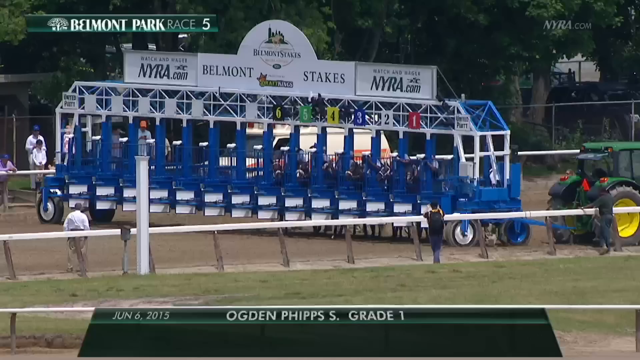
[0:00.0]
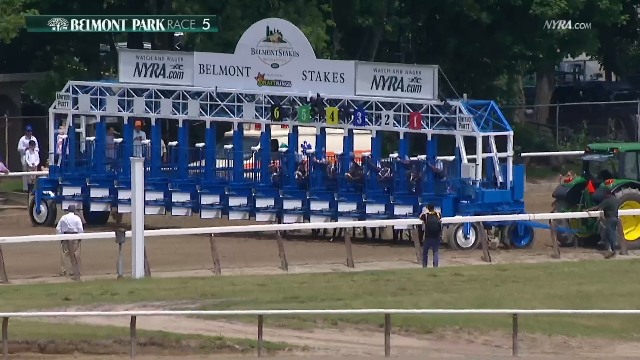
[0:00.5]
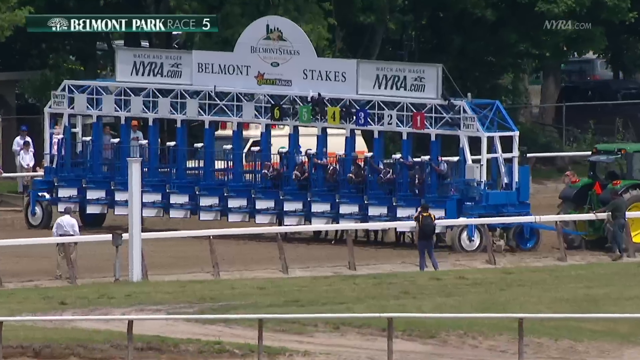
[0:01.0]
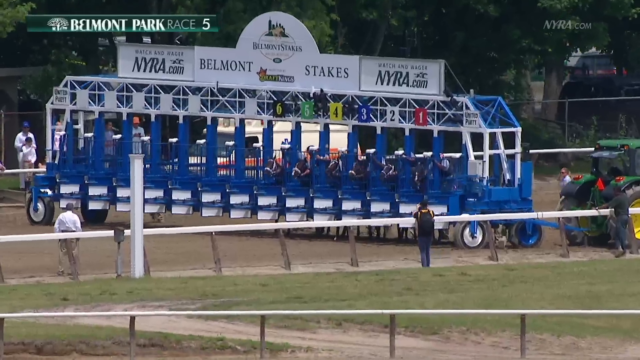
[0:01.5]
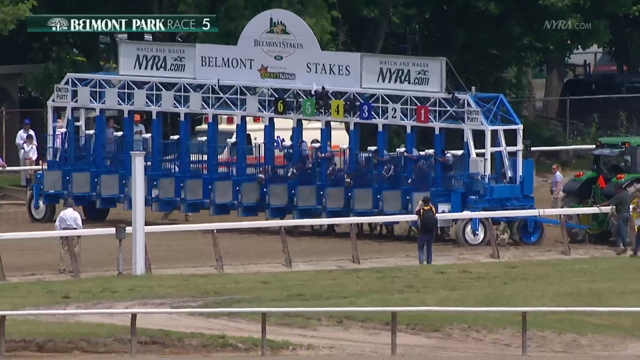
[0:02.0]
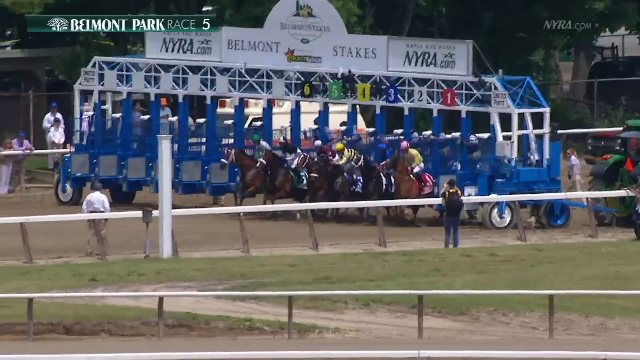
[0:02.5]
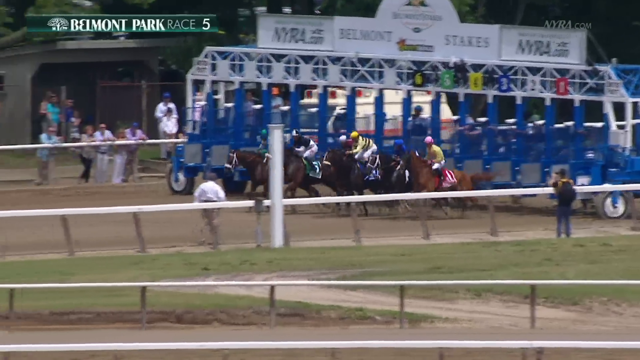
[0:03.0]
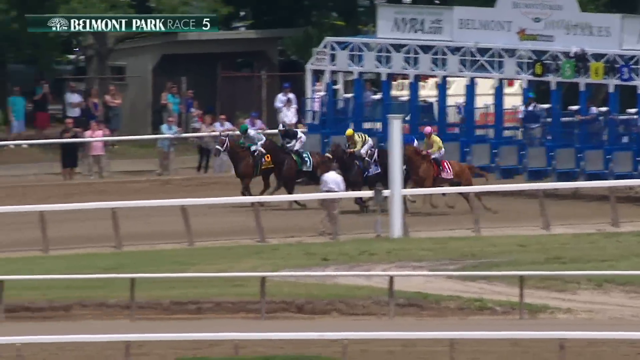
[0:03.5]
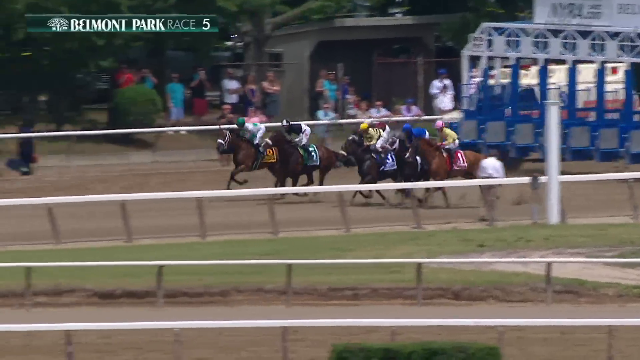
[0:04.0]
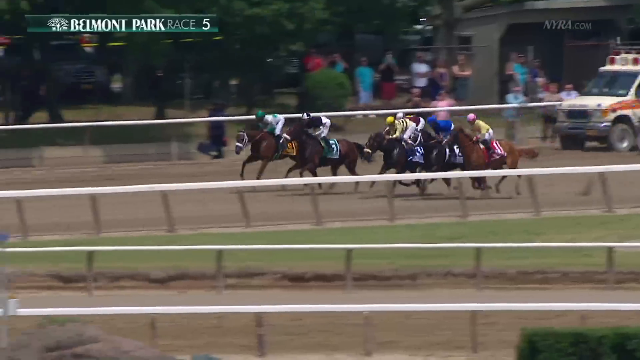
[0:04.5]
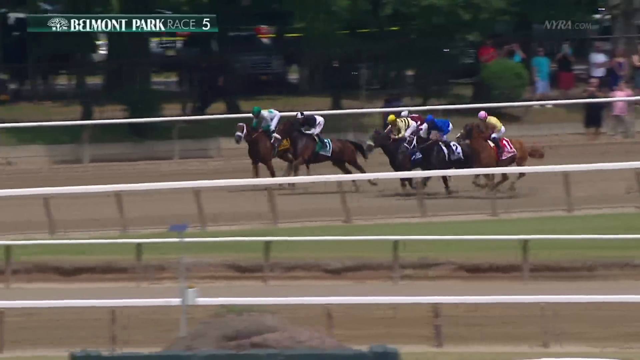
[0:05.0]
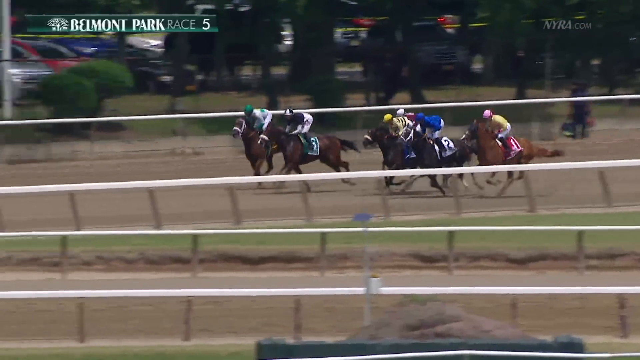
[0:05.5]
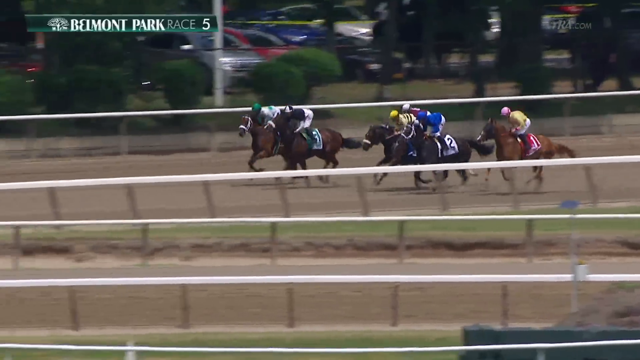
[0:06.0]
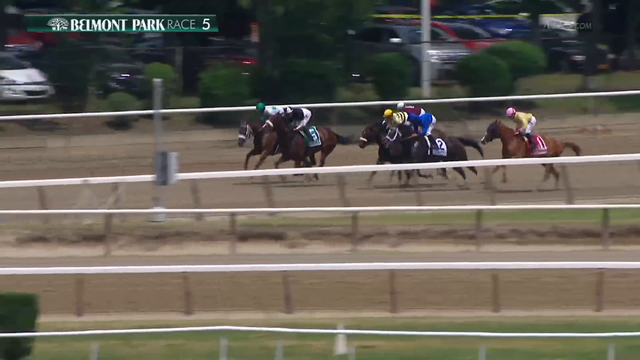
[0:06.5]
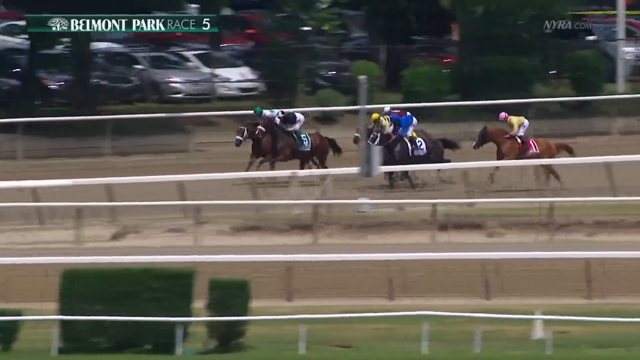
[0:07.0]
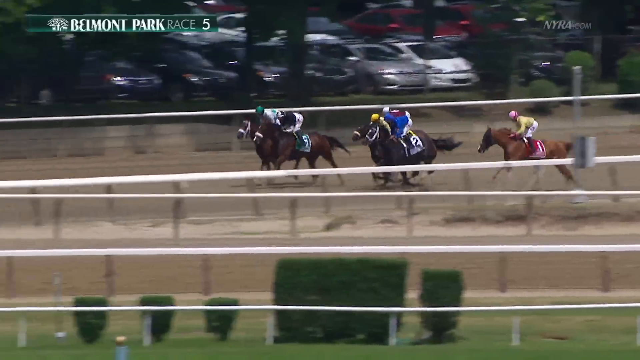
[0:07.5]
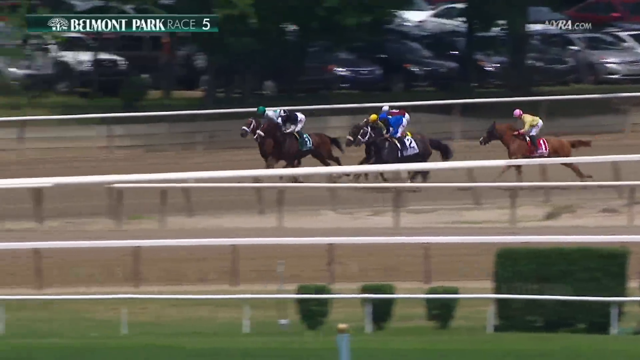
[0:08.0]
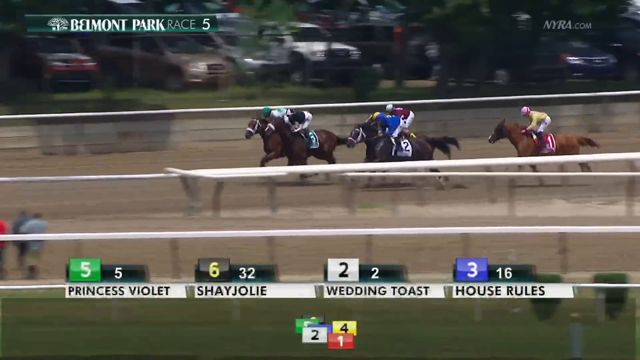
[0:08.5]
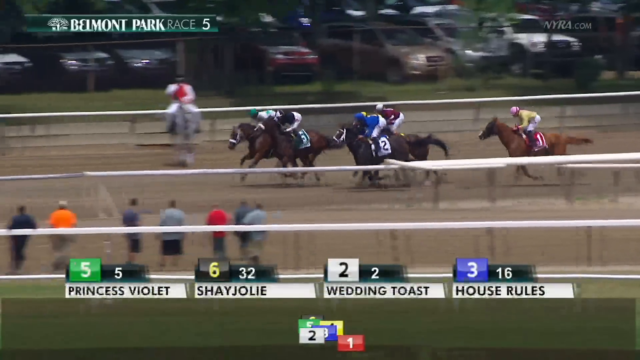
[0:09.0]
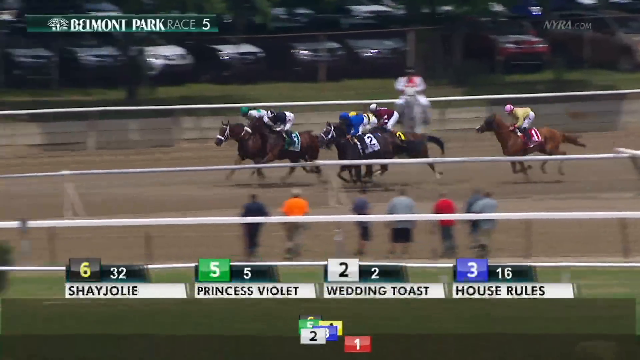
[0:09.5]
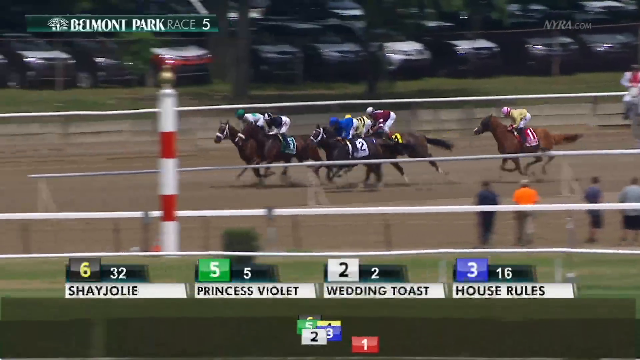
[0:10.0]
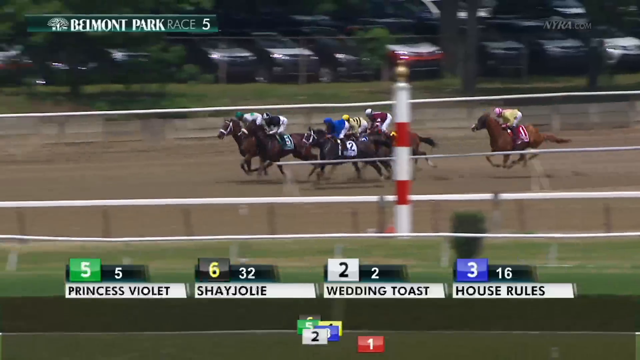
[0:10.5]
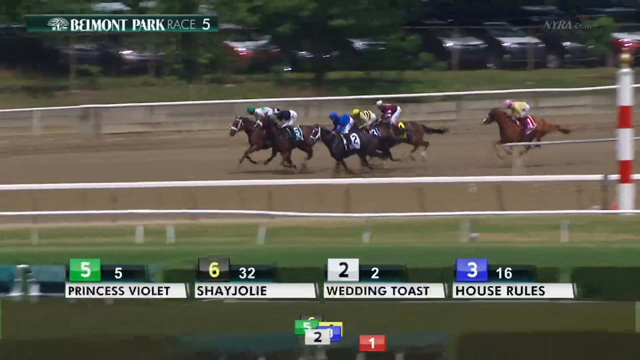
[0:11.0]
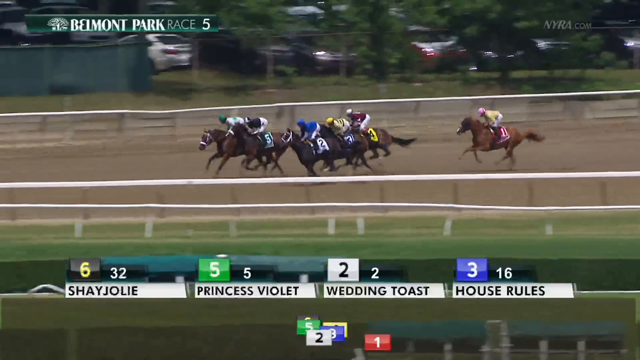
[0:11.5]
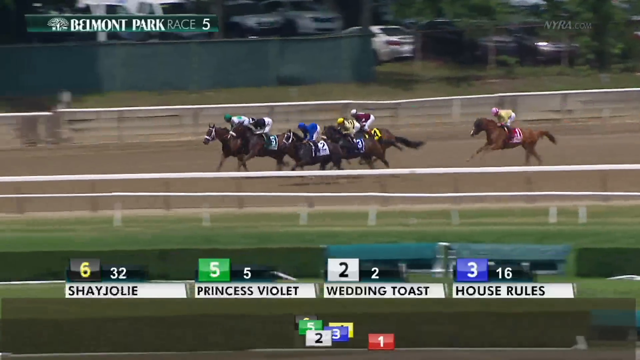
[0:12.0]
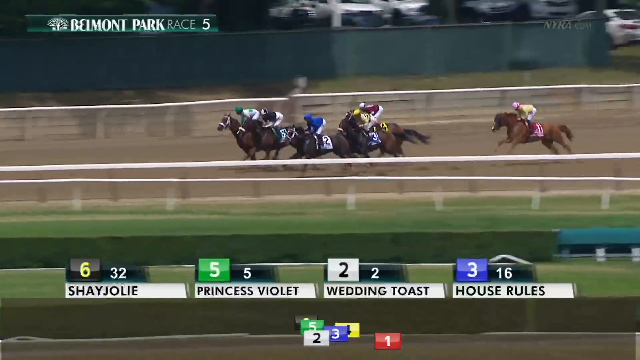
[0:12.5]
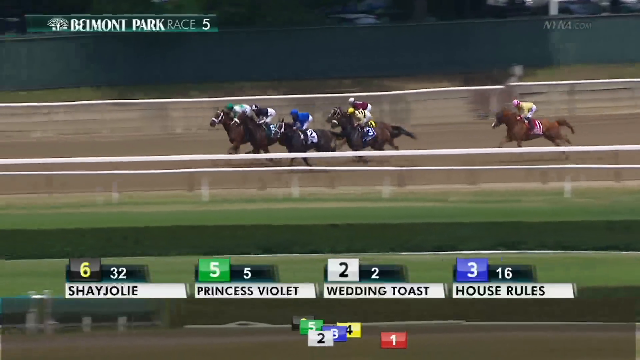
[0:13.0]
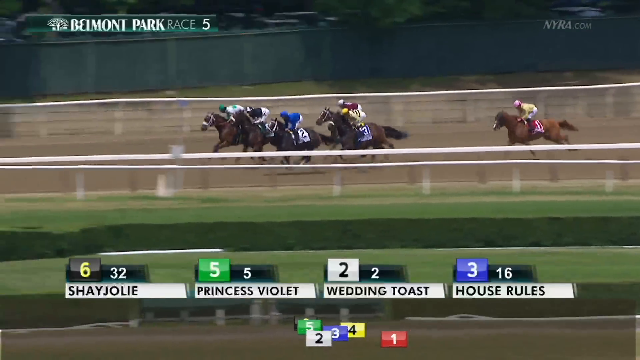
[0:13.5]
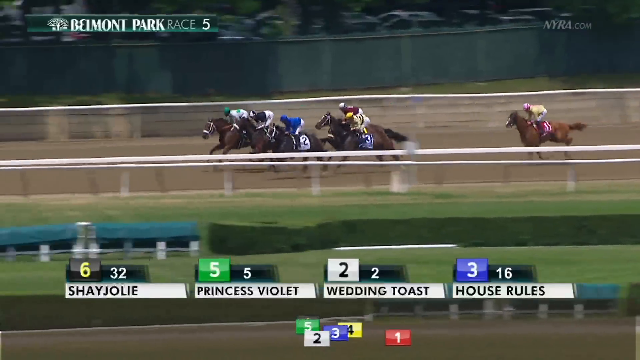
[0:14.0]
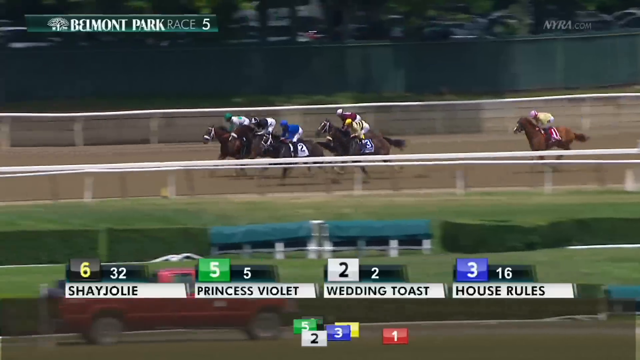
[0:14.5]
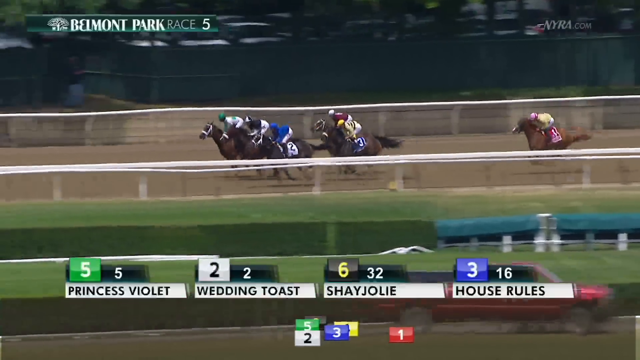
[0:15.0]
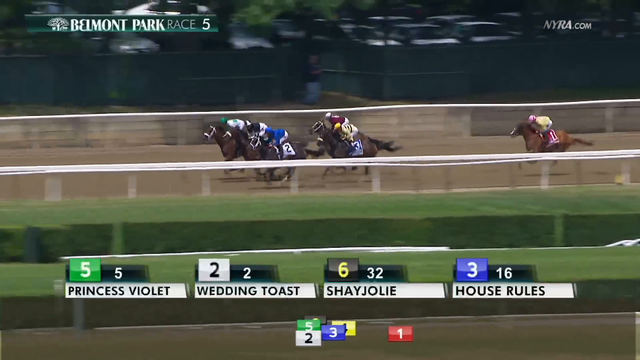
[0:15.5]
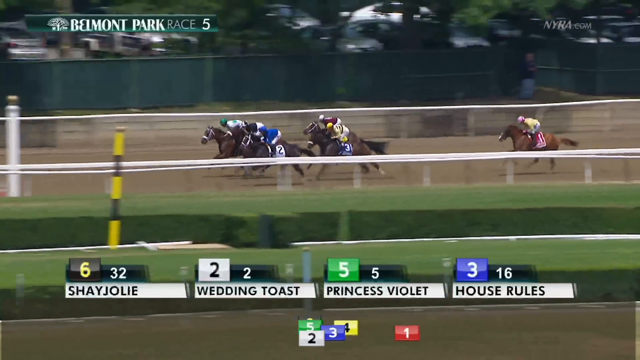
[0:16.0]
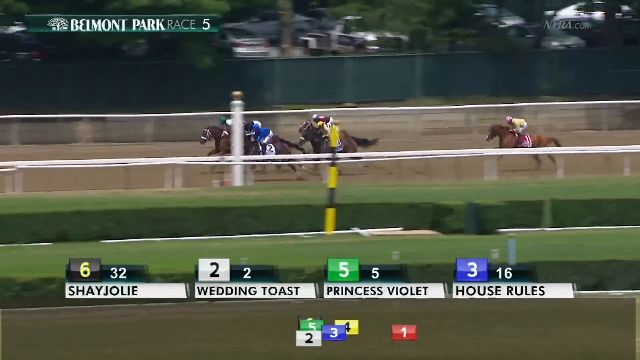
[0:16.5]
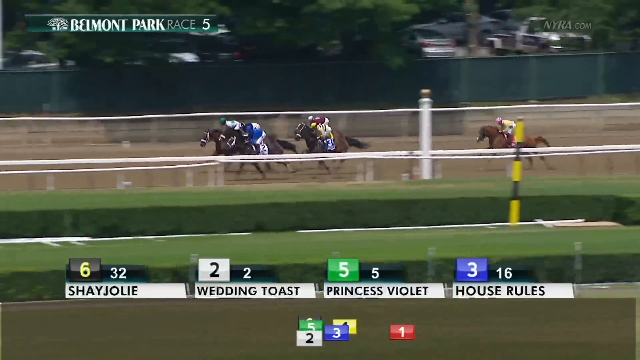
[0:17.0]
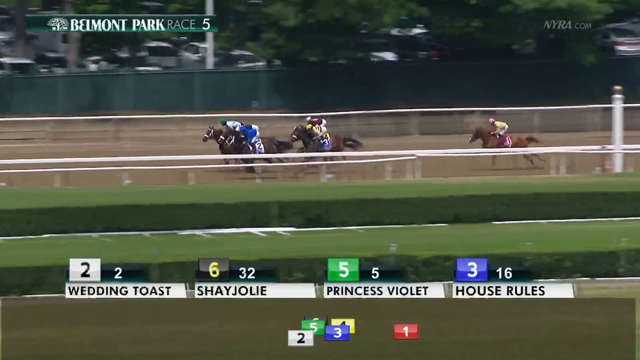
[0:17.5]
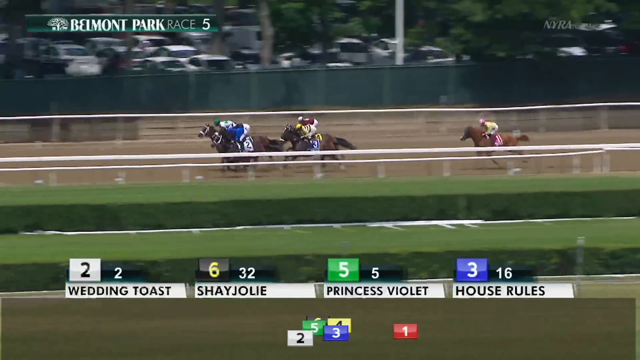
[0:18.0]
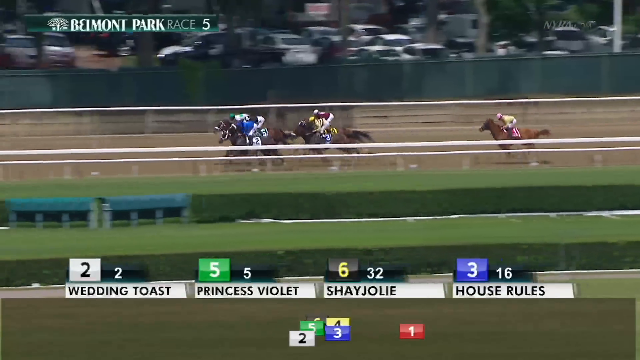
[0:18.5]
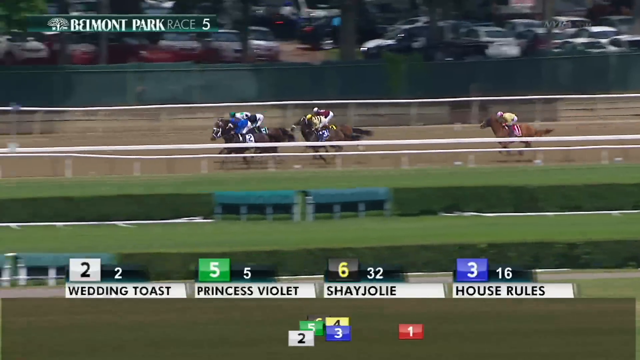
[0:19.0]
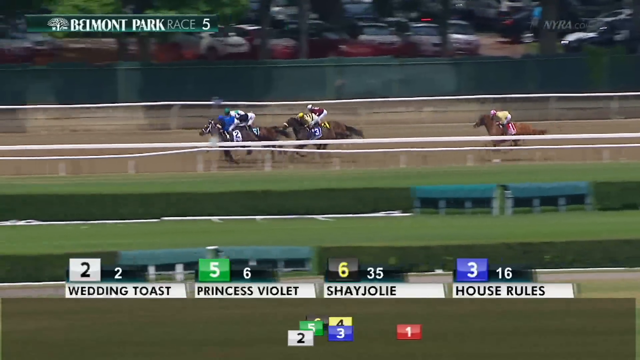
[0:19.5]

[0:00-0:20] The video opens on the starting gate of a track at the Belmont Raceway in New York City. A sign above the gate reads "Belmont Stakes" and shows the sponsor as "New York Racing Association.com". Horses line up in the gates, a green tractor appears behind them on the right, and the race starts. Five or six horses run down the back stretch. Two of them lead, but a horse in blue, number two, comes up on the inside as they approach the first corner. Number two takes the lead by a nose as the horses round the first corner and head into the back straight. The sign seems to advertise the Belmont Stakes rather than identify this particular race.